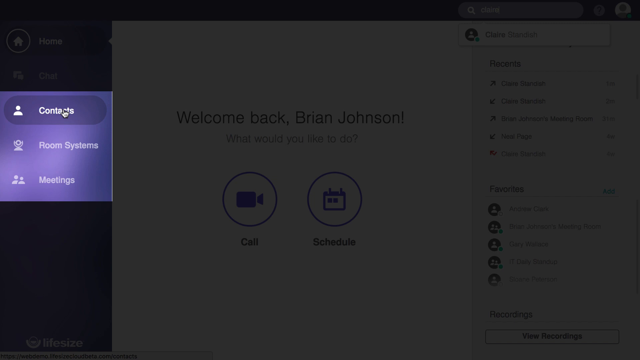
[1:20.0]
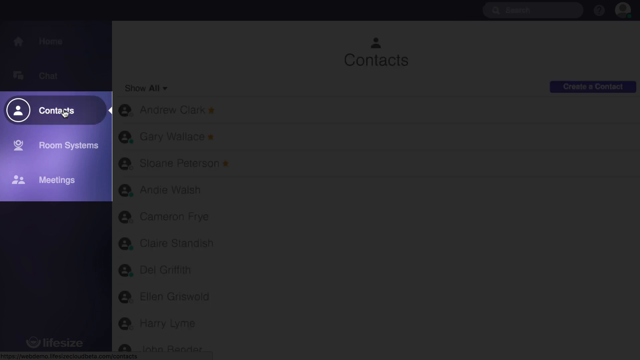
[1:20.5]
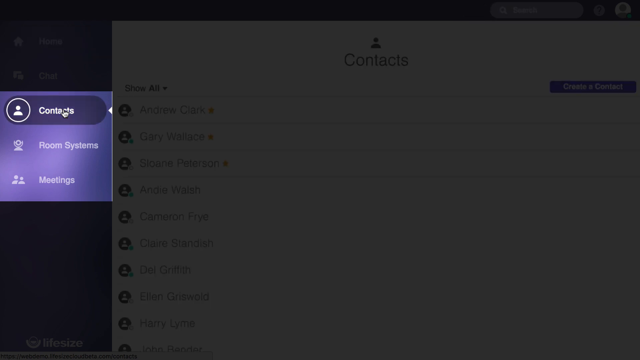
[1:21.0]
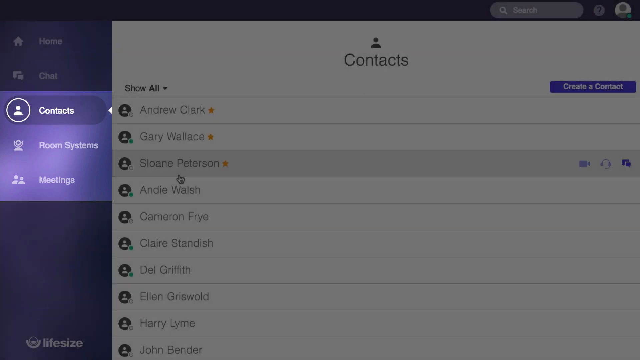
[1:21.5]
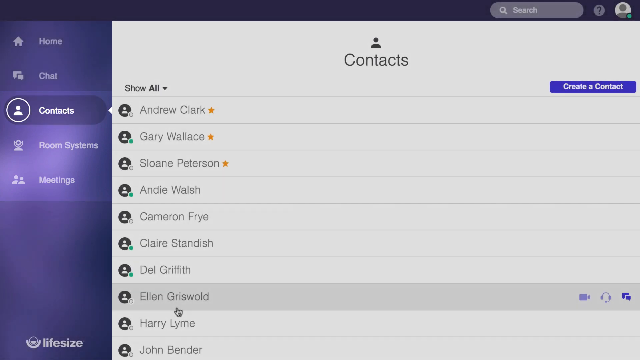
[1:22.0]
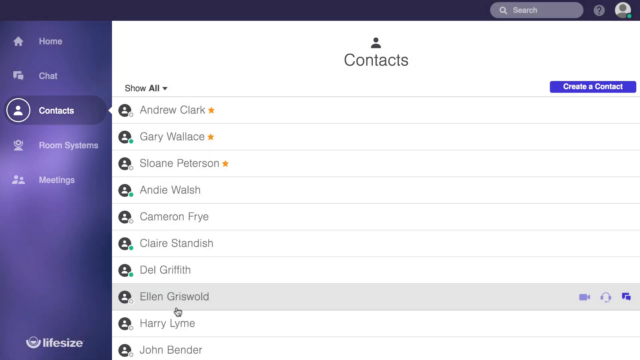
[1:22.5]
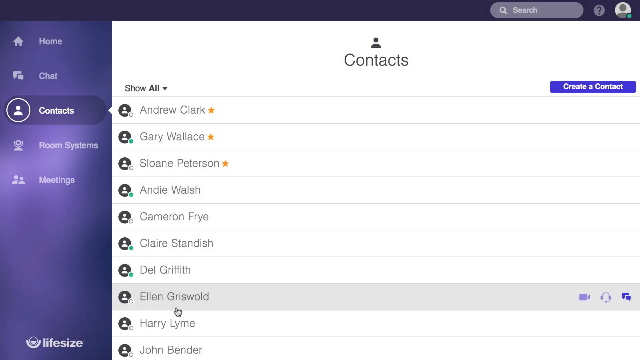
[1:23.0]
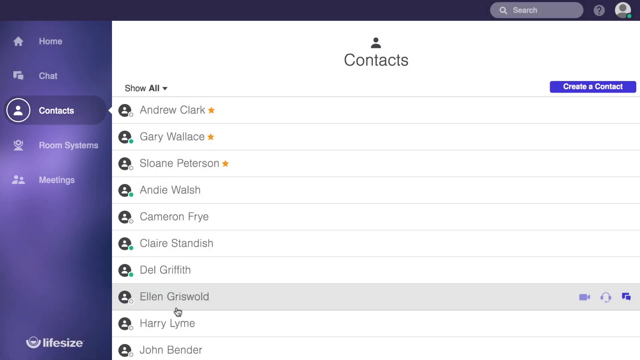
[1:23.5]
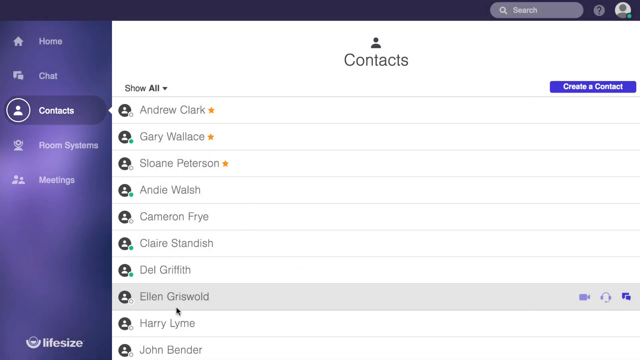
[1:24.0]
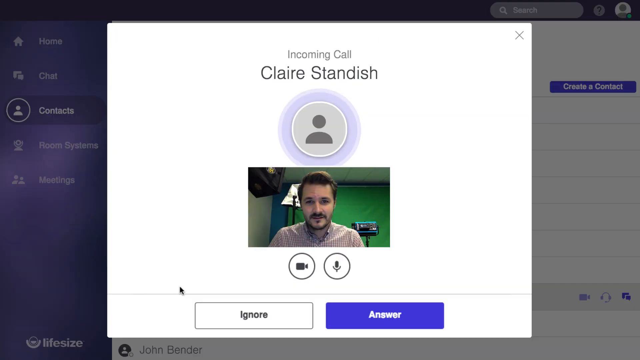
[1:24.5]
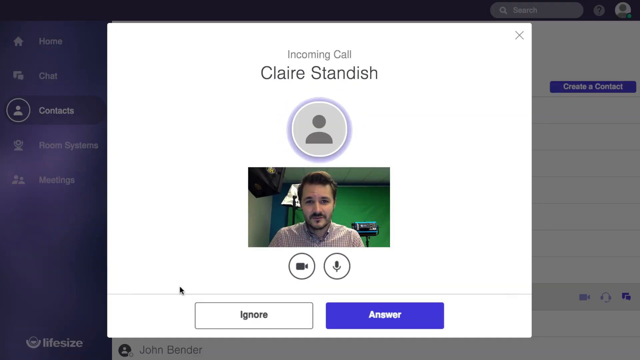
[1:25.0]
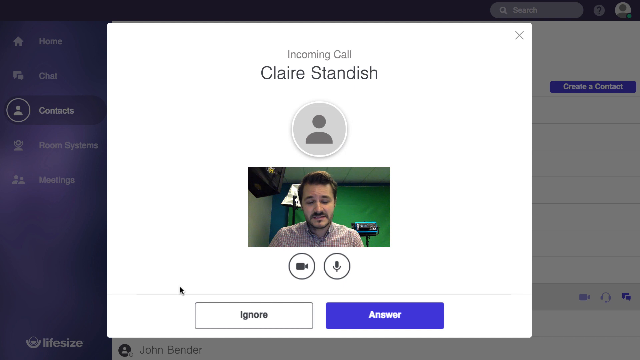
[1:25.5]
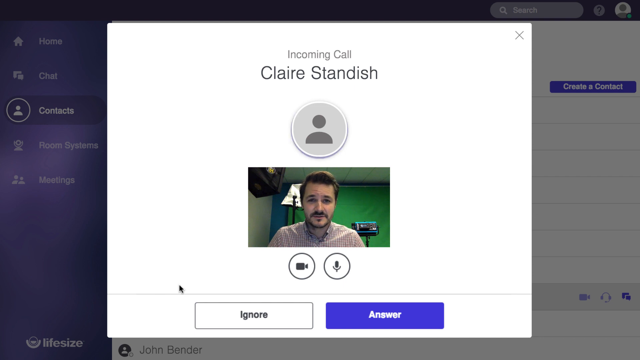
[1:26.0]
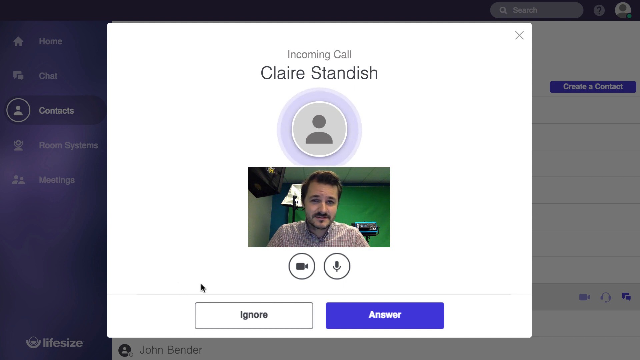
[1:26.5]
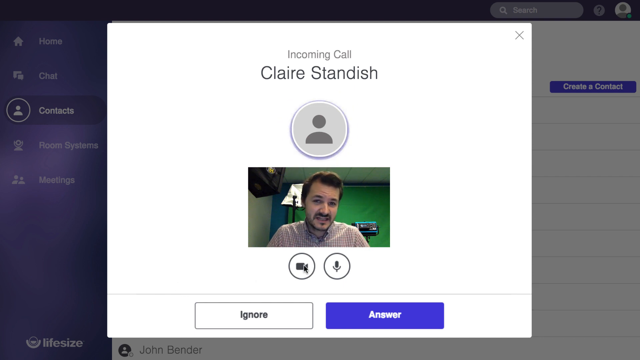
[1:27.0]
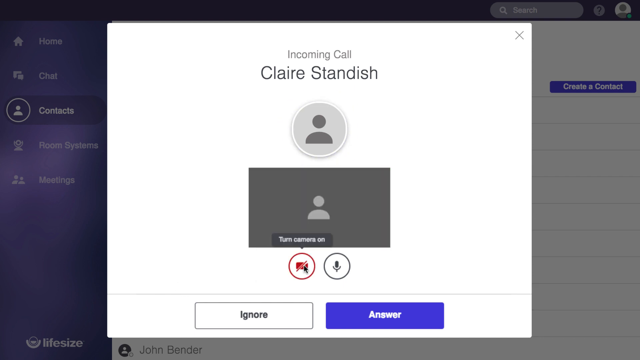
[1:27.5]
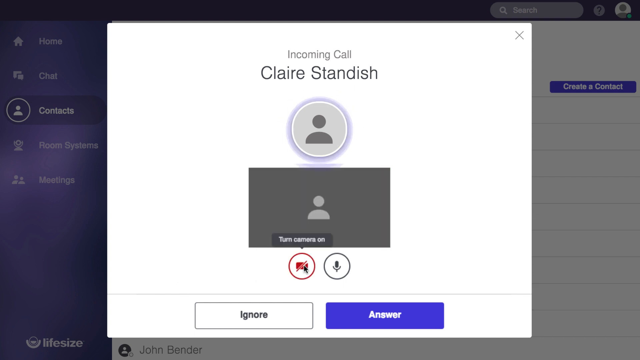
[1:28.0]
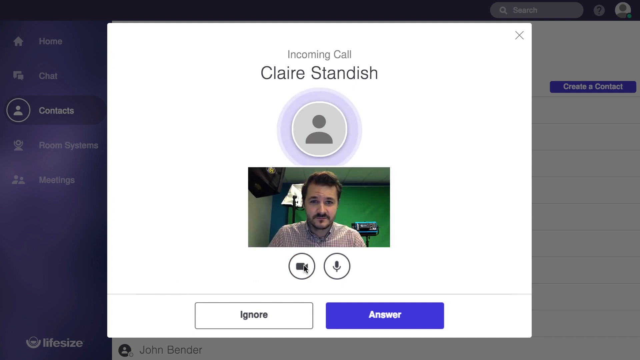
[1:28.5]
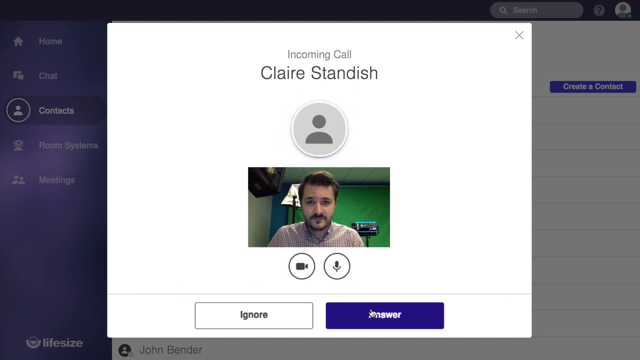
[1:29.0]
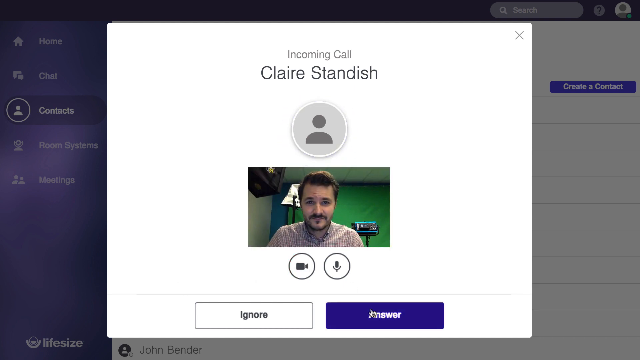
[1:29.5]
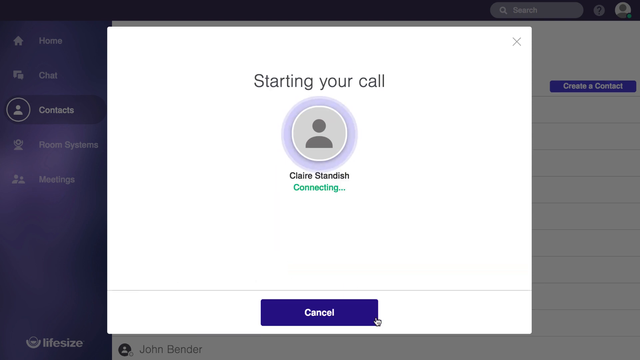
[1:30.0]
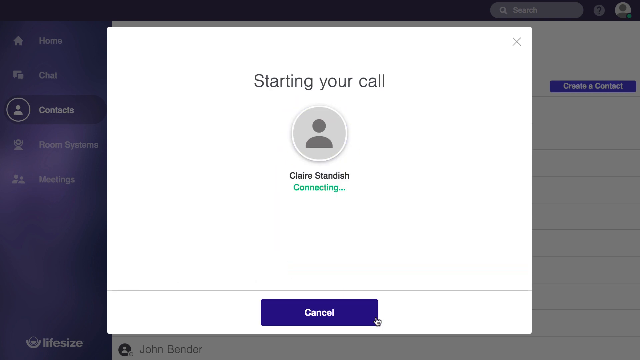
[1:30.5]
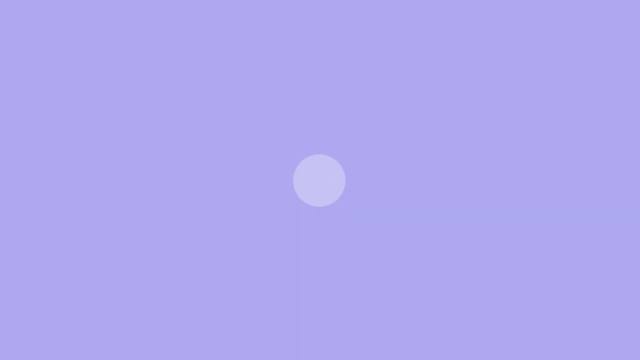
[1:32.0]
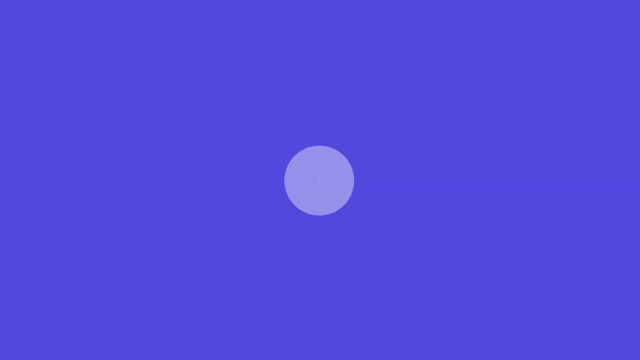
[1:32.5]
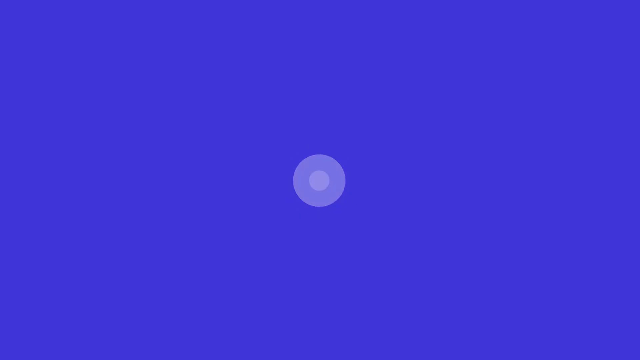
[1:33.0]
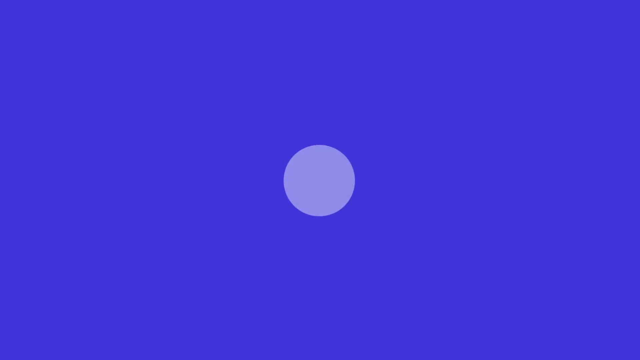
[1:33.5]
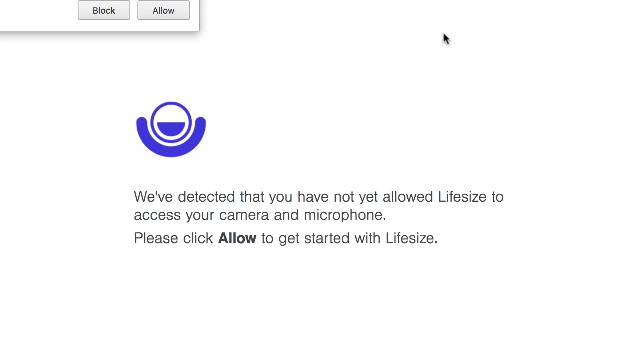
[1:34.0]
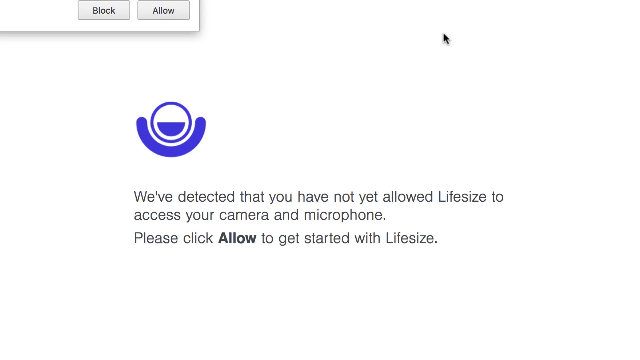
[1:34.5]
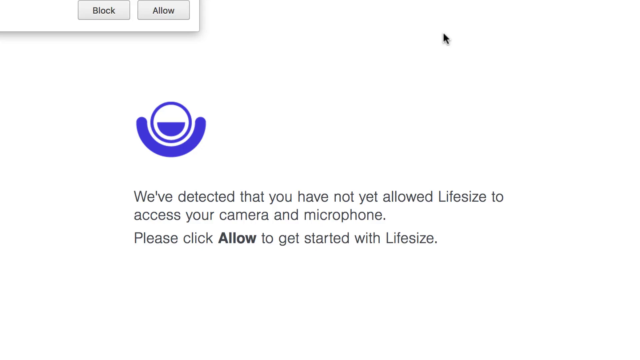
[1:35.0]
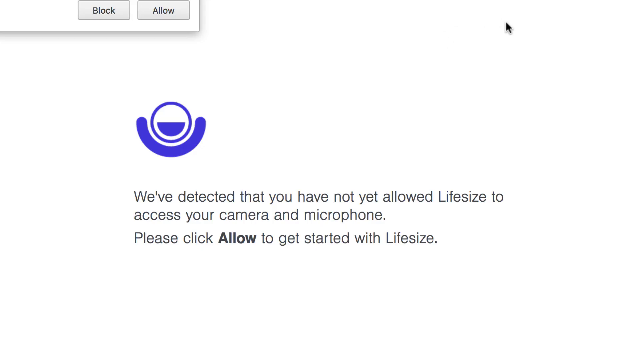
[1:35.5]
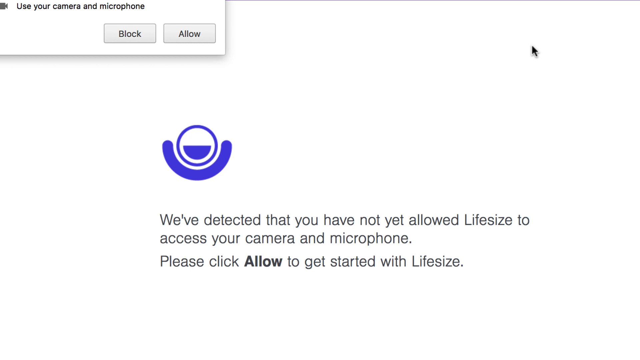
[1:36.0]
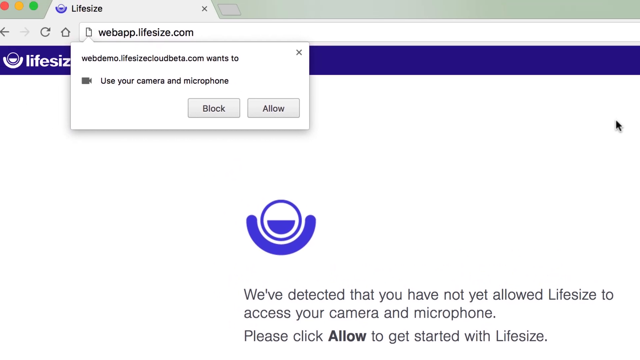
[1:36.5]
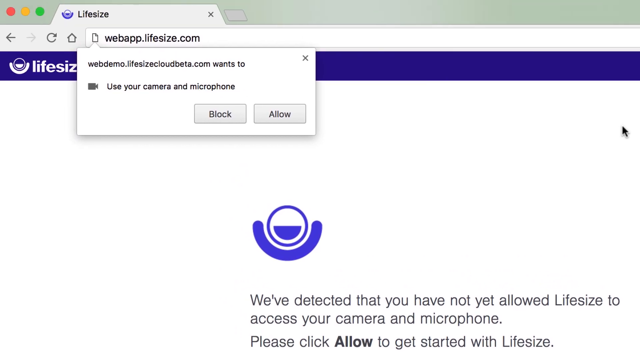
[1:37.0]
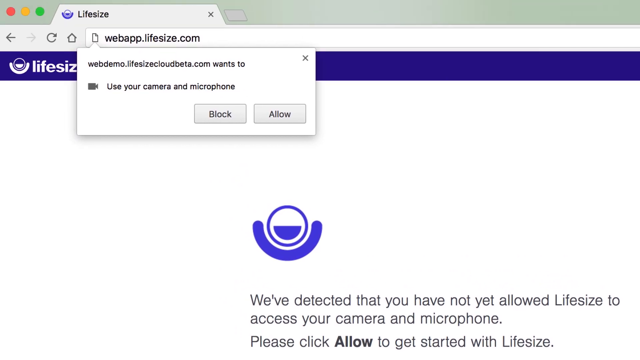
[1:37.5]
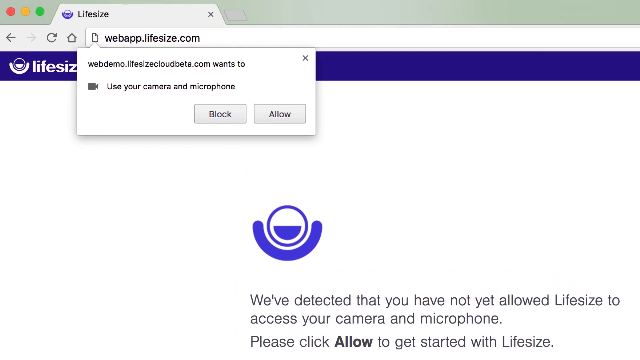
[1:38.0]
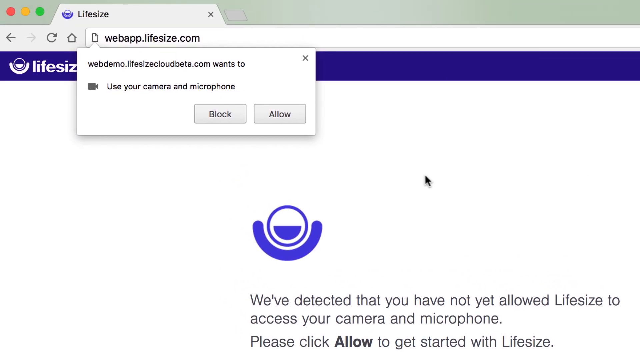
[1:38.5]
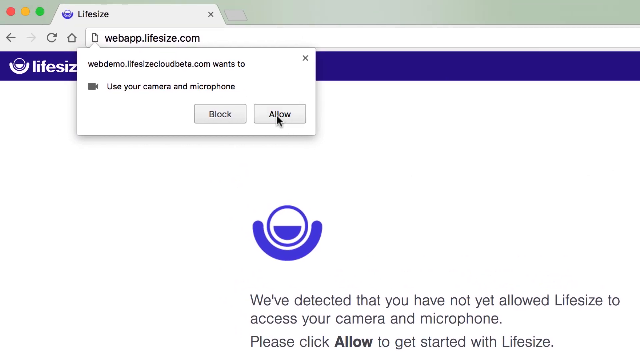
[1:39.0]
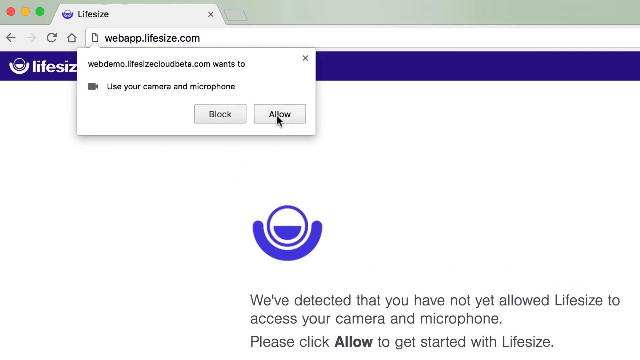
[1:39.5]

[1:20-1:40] An open page for a messaging website shows a screen that says "Welcome back, Brian Johnson! What would you like to do?" Below it are a button on the left with a camera emoji and Call underneath, and a button on the right with a calendar in it and the word Schedule below. On the left side of the screen is a menu, where the cursor has highlighted the Contacts button; a list of contacts appears. The cursor scrolls down the list and appears to highlight the name Ellen Griswold. The screen changes to one with a header that says "Incoming Call" and the name Claire Standish above a generic person icon that appears to be pulsating. Below that is a small video screen with a man looking at the camera and talking briefly. The cursor clicks on the camera icon, which turns red with a cross through it. The screen changes to one that says "Starting your call," and then to a message reading "We've detected that you have not yet allowed Lifesize to access your camera and microphone. Please click Allow to get started with Lifesize." The camera pans up to the open Lifesize tab at the top of the screen, where the cursor clicks on the Allow button.